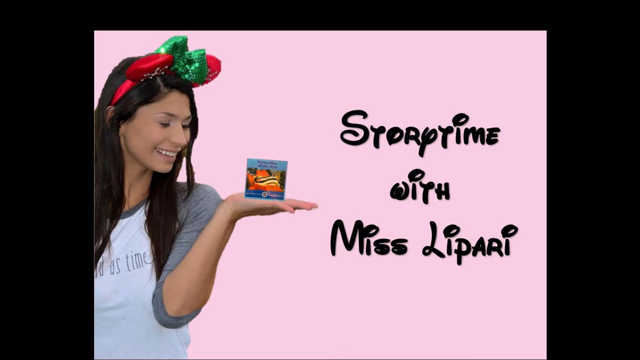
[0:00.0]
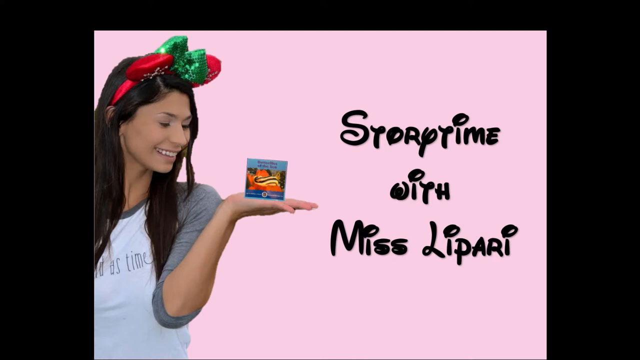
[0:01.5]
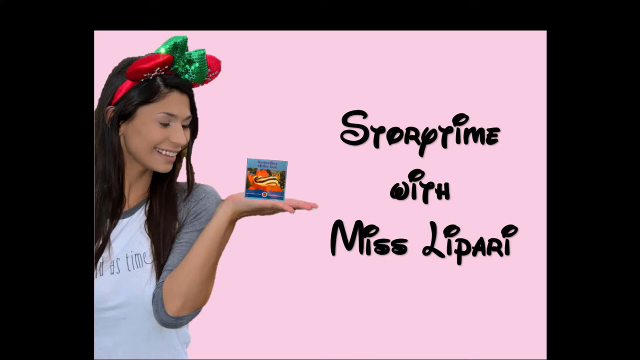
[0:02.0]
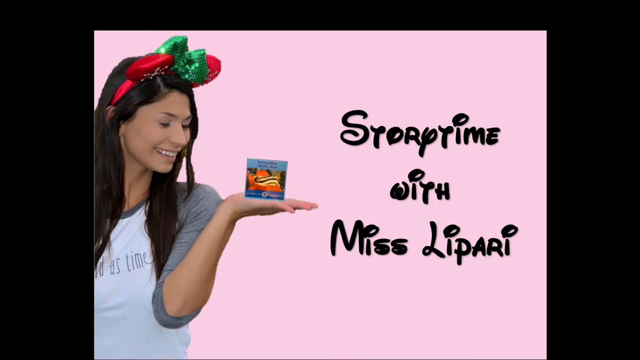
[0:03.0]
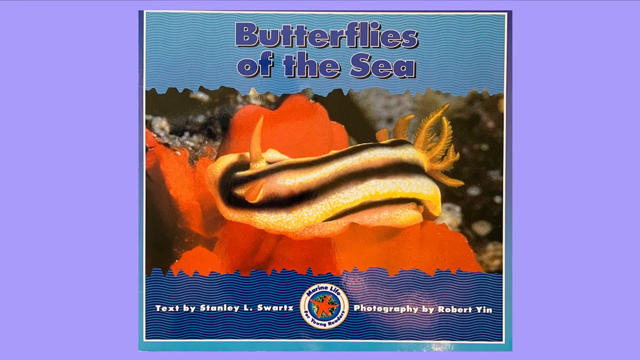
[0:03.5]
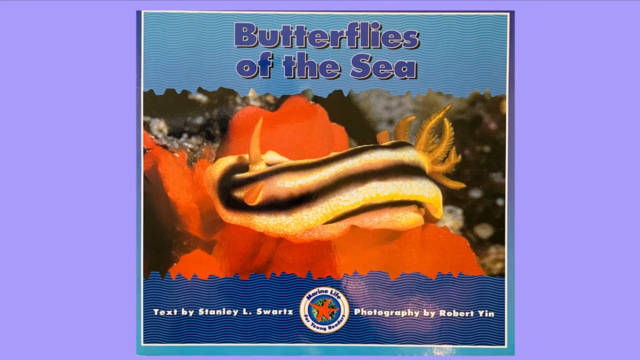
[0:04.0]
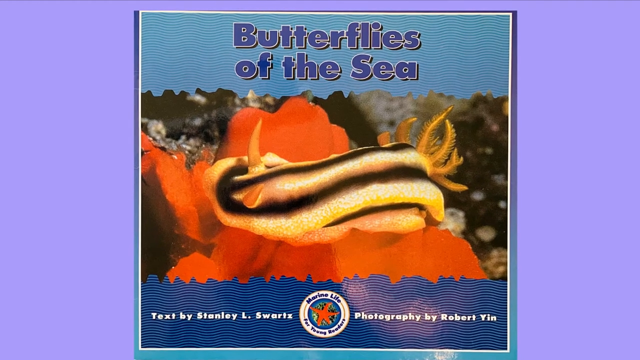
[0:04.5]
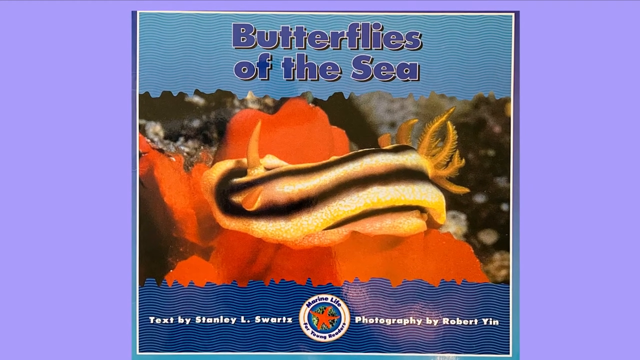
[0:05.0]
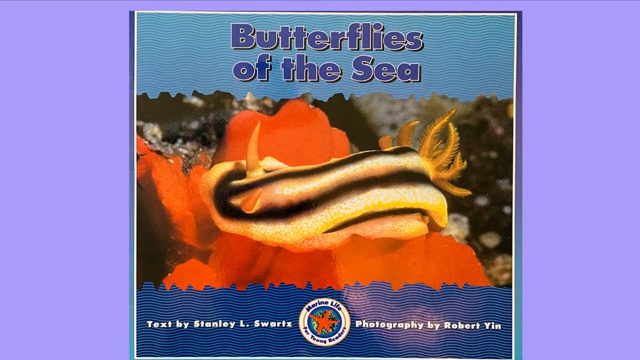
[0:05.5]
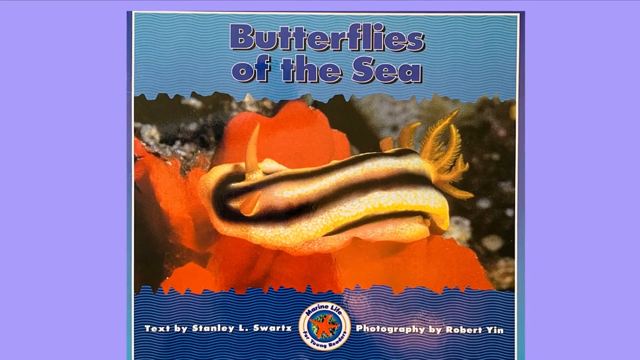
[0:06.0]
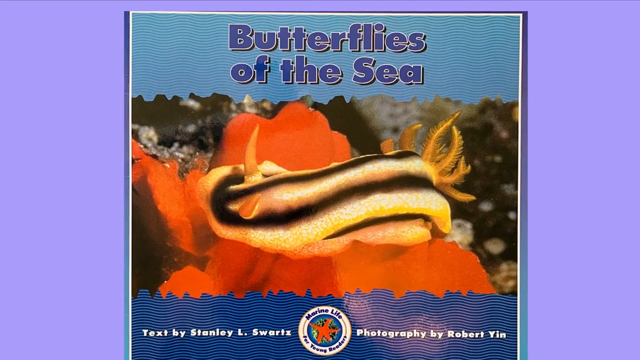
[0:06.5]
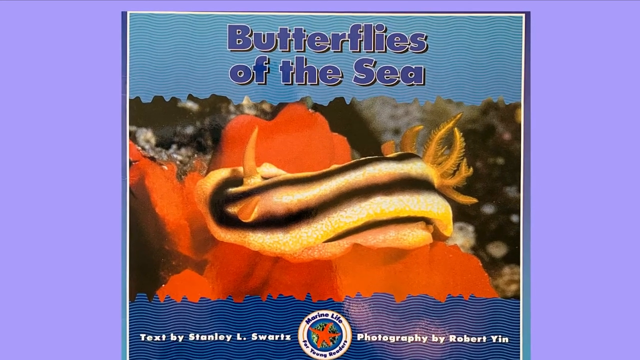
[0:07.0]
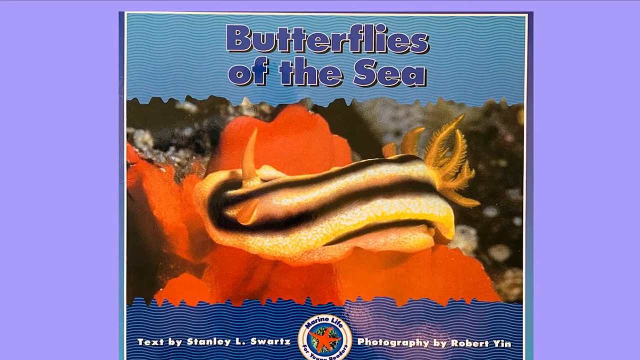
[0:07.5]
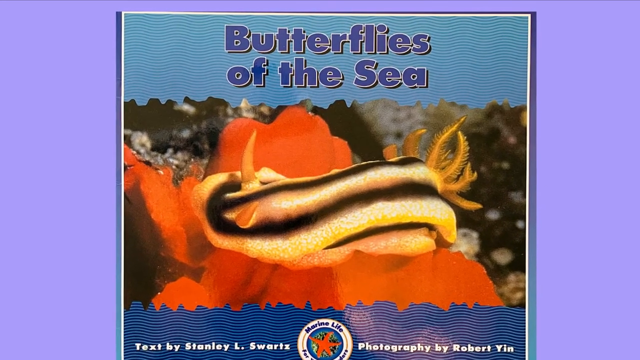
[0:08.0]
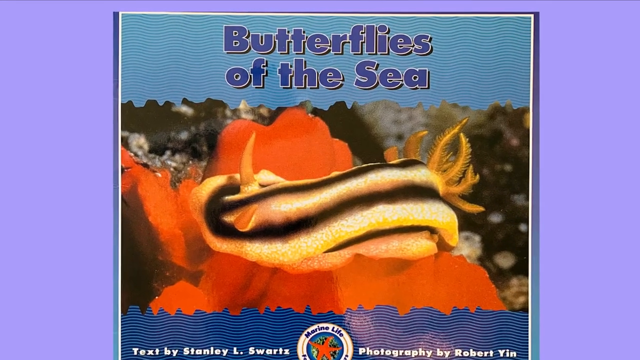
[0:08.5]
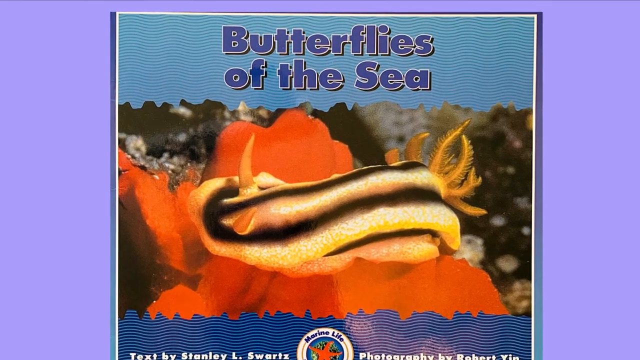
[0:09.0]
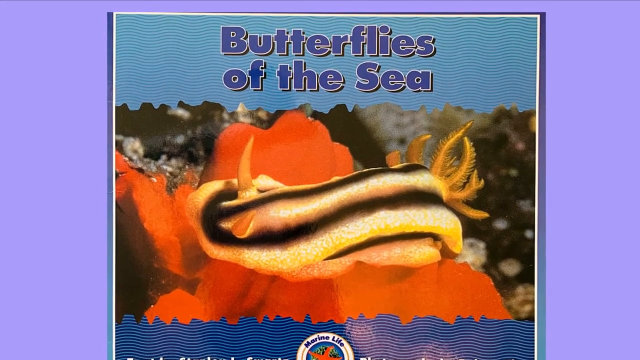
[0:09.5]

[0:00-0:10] The video opens on an image with a light pink background. On the left is a cutout photo of a young woman with dark brown hair that falls a little past her shoulders. She wears a white shirt with gray quarter-length sleeves and a red Minnie Mouse ear headband with a green bow, and she holds up her hand with a box on her palm. The box cover appears to show a yellow, slug-looking animal with black vertical stripes. To the right, on the pink background, black text in a font that looks somewhat like Disney lettering reads "Story time with Miss Lipari." The screen then changes to a light purple background with a large image that looks like a book cover. A light blue border at the top holds the dark blue title "Butterflies of the Sea," and a dark blue border at the bottom holds white text reading "Text by Stanley L. Swartz, Photography by Robert Yin." Between the borders, the image shows a yellow, slug-like object with two black stripes down its back, sitting on a reddish orange plant that appears to be at the bottom of the ocean.